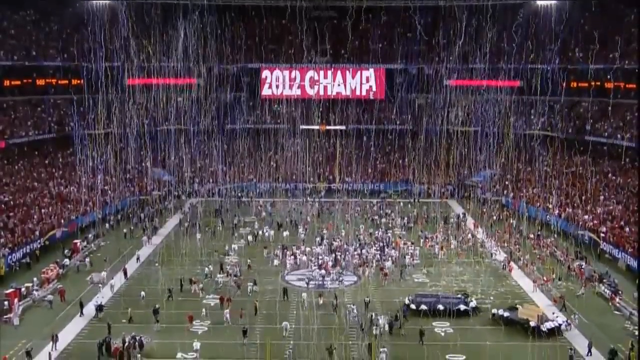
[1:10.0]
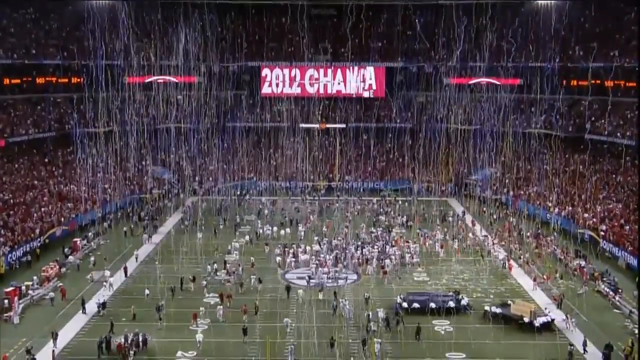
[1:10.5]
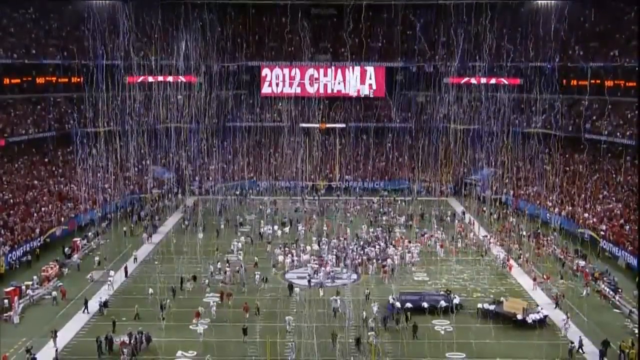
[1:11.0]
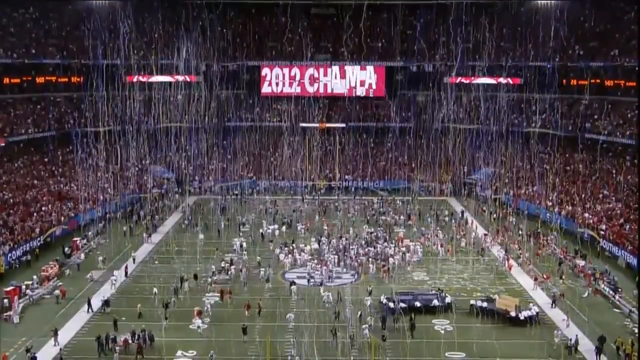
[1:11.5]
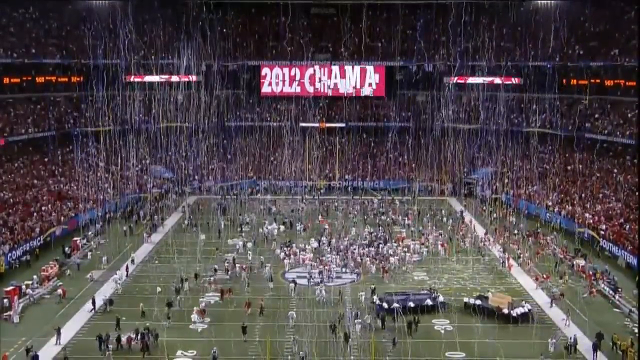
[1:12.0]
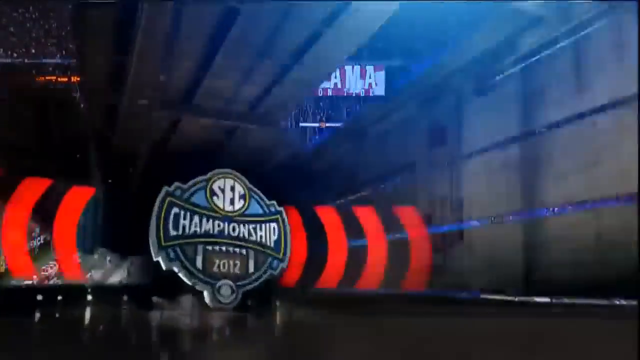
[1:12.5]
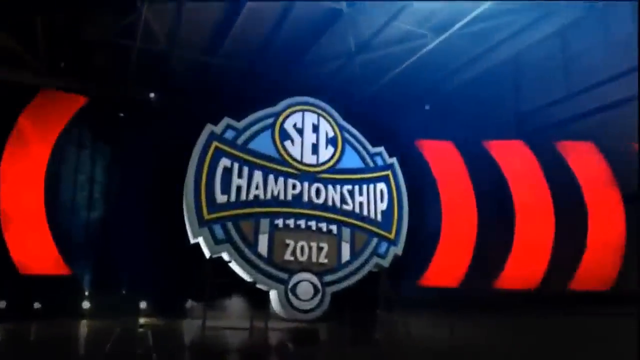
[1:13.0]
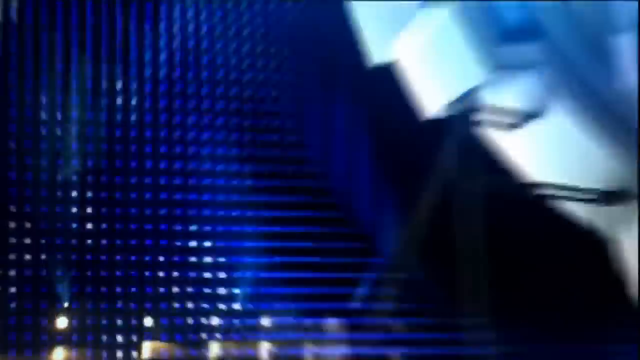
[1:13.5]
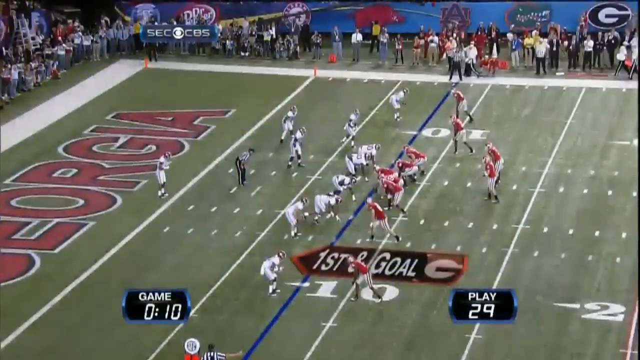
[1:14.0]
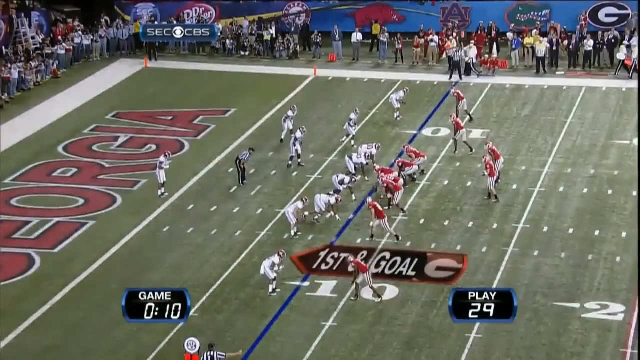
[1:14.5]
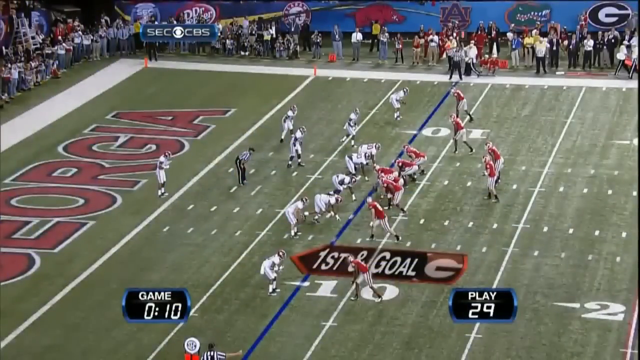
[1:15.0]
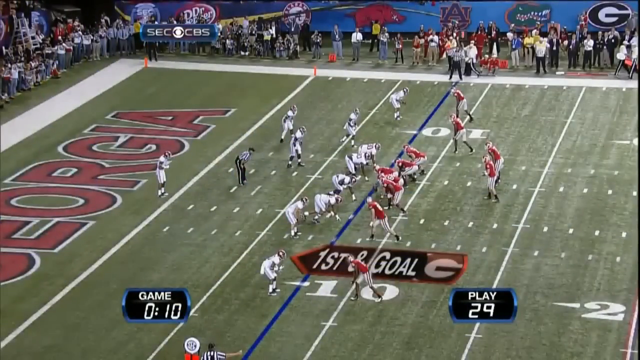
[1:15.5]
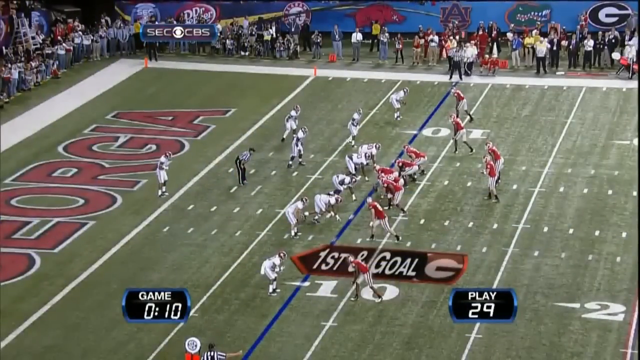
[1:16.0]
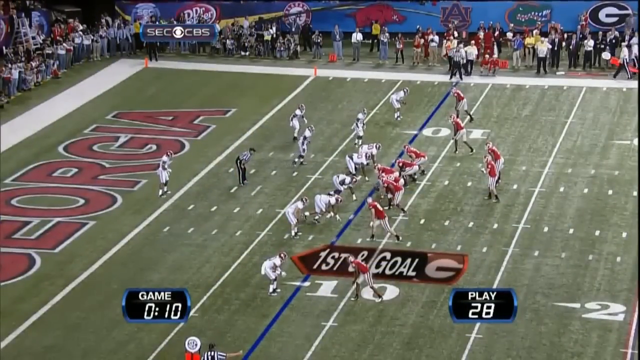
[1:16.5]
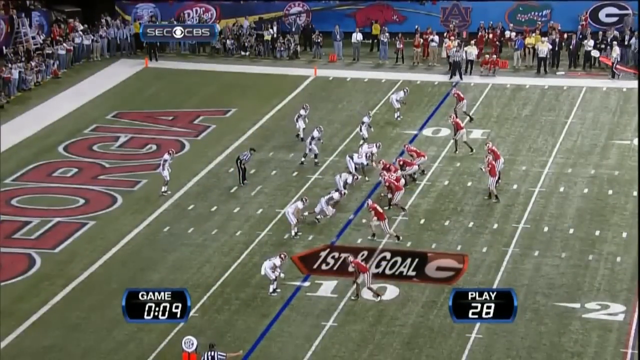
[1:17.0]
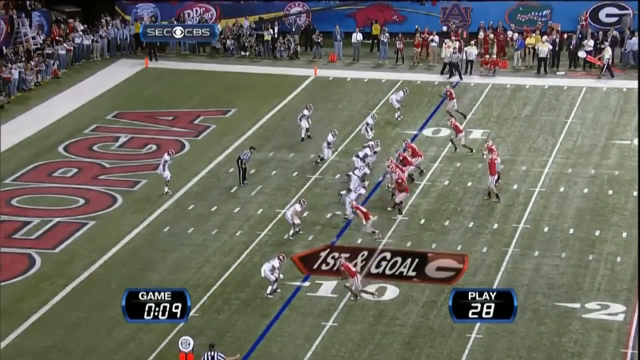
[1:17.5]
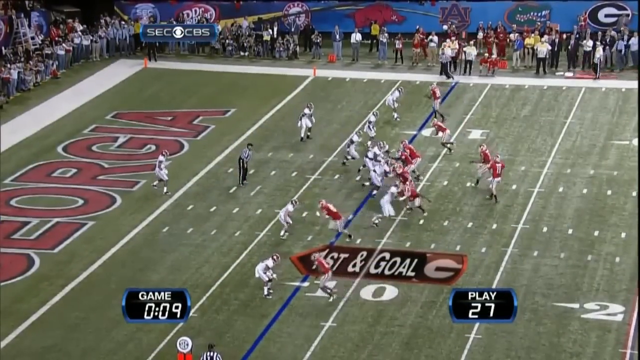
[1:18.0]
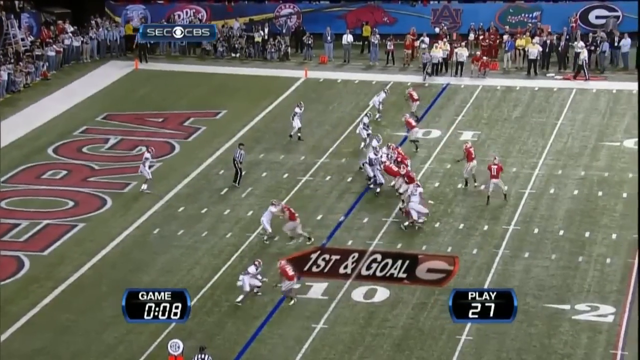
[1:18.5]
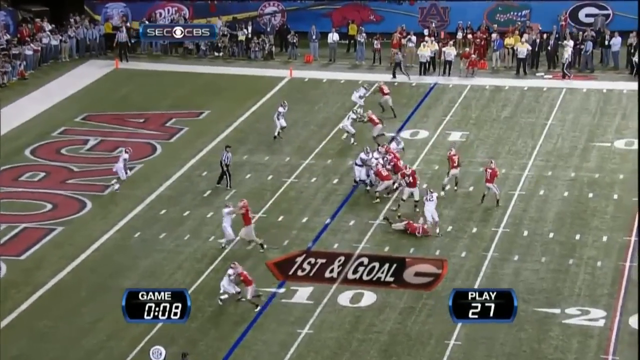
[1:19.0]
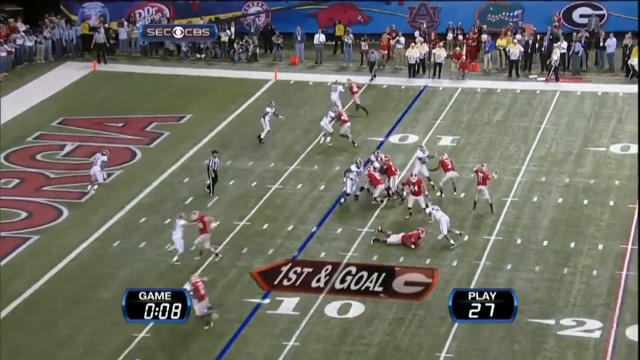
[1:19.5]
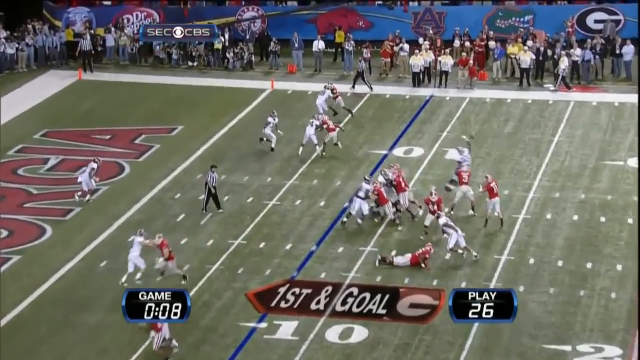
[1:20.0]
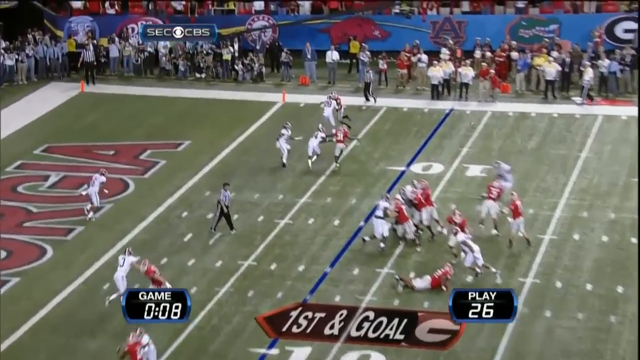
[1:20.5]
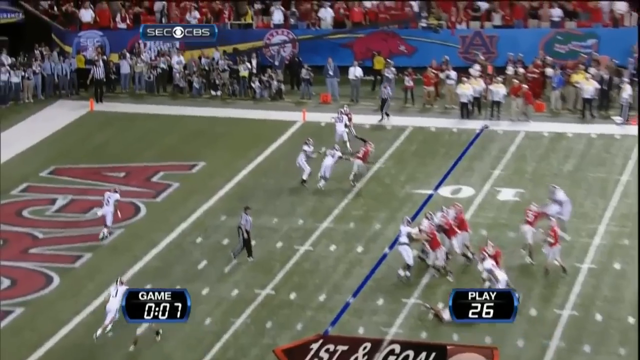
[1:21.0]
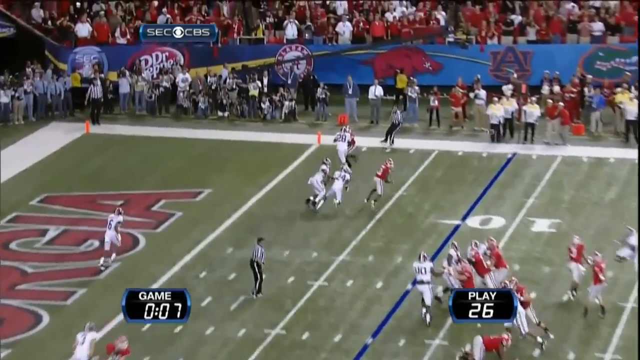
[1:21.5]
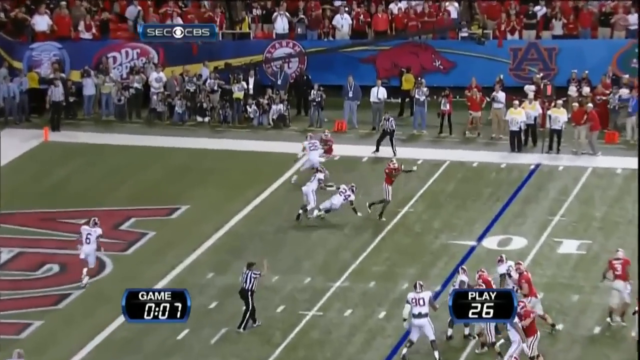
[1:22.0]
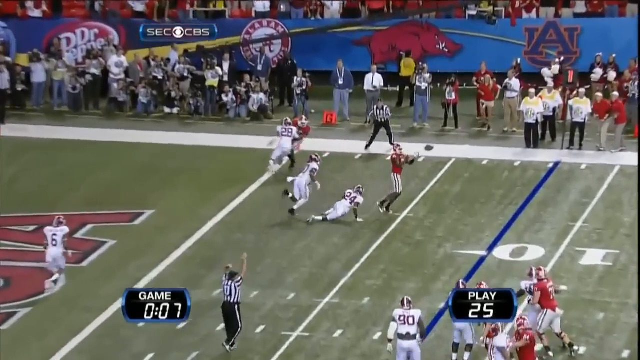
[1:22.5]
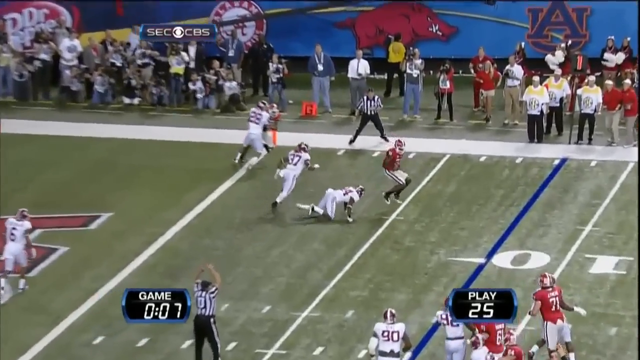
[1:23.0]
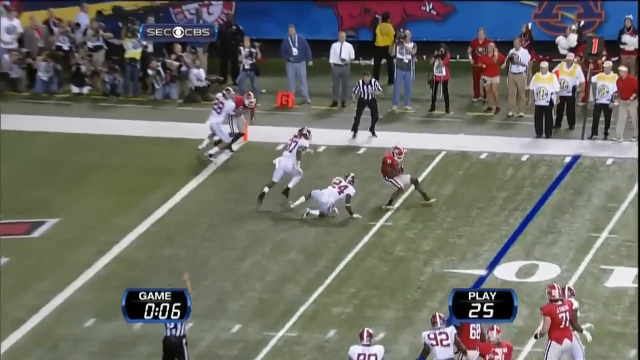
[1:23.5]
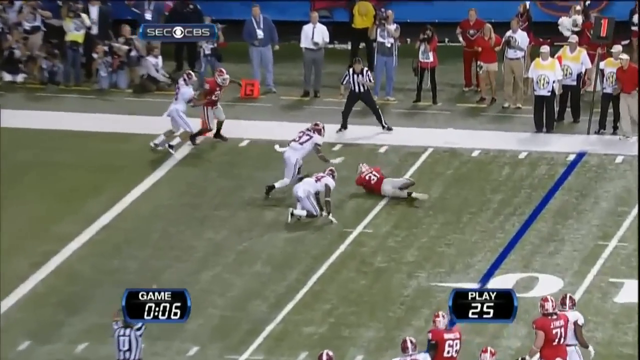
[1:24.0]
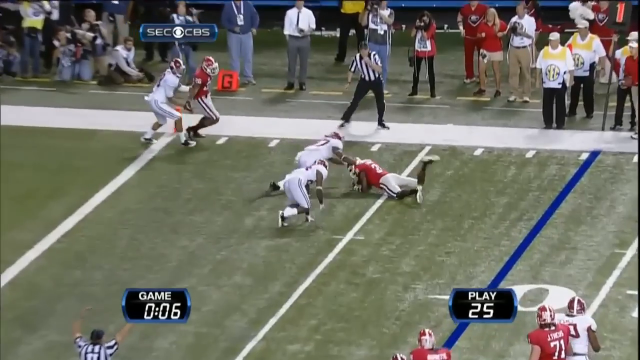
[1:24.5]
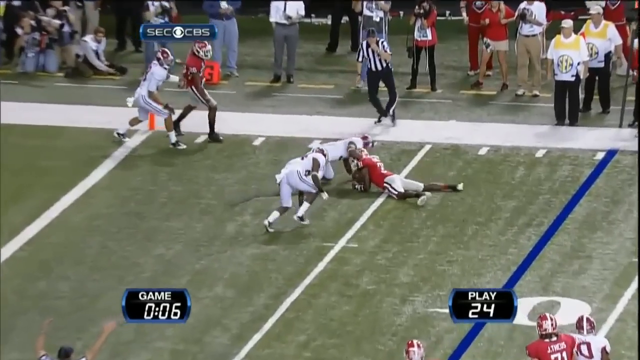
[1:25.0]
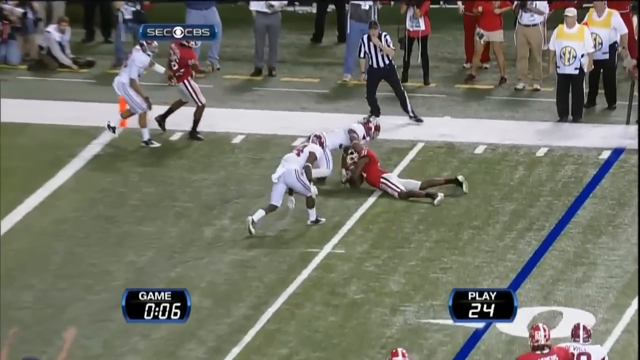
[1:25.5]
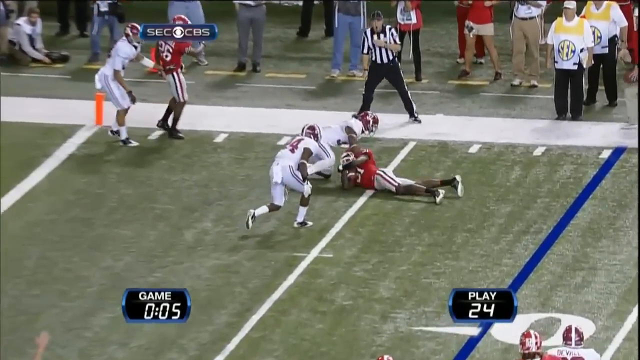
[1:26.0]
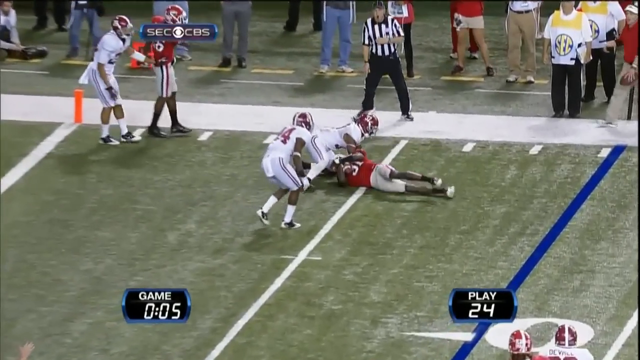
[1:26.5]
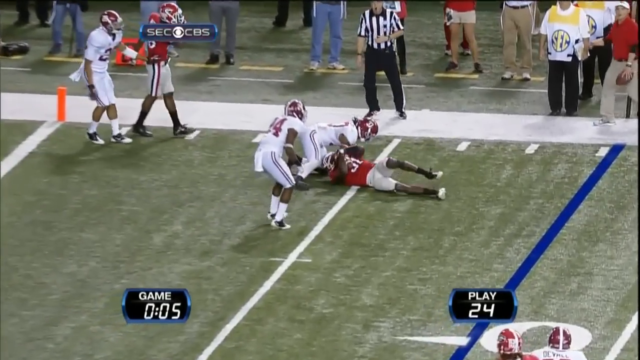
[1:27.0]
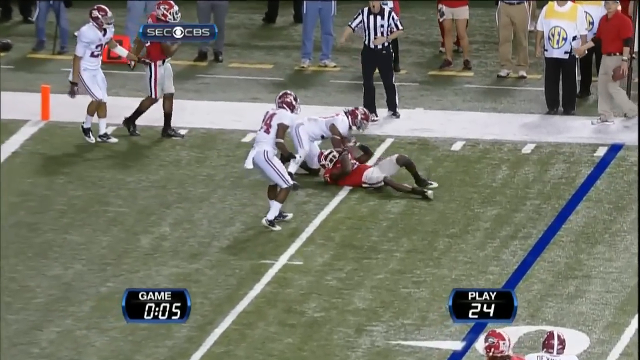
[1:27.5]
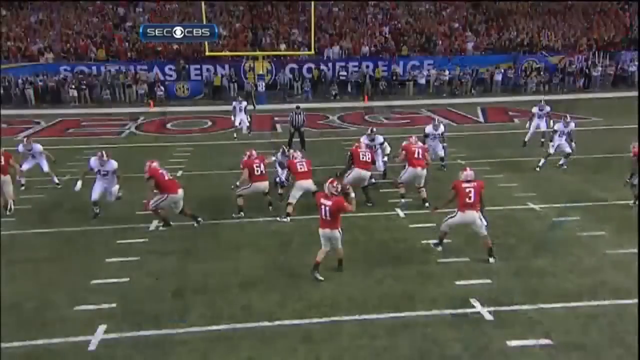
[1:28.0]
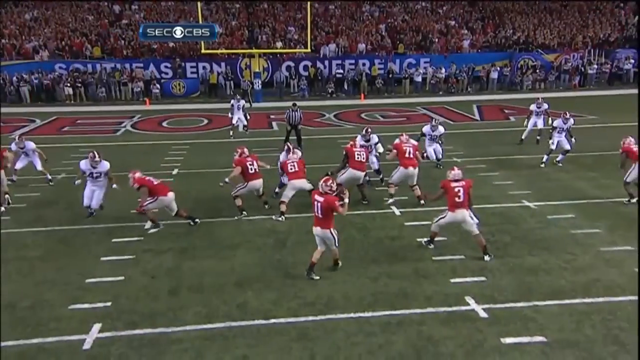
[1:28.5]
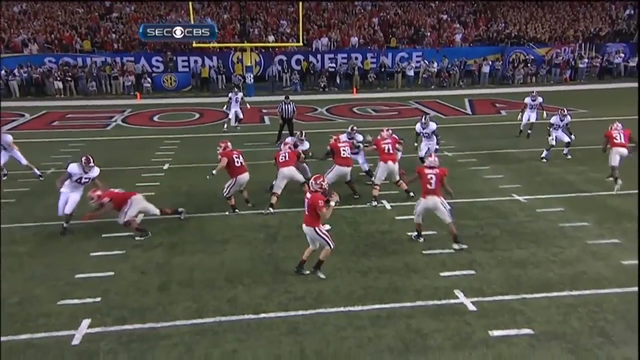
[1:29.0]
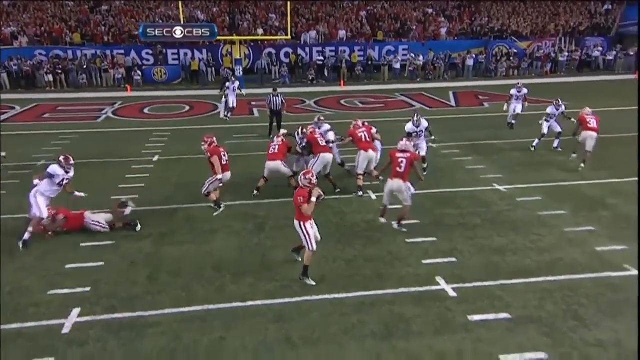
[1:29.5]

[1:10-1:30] A sort of aerial shot shows a very large scoreboard ahead that reads "2012 Champ" on a red background. What looks like confetti, a very string-like substance, falls from the top of the stadium down below. Many players are on the field at the bottom of the video, and some trucks are on the field at the bottom middle. A logo reading "SEC Championship 2012" appears, and then the final play is shown. At the bottom left, a small square box reads "Game" with only 10 seconds, and at the bottom right a small square play clock reads "29". The team on the right is in red jerseys. The quarterback catches the ball and immediately throws it to the right, and a player on the defense hits the ball, so it does not go fully where the quarterback wants it to; one of the other receivers catches it short of the end zone. The two teams are Alabama and Georgia. A referee in a black and white jersey on the sideline watches the whole play.